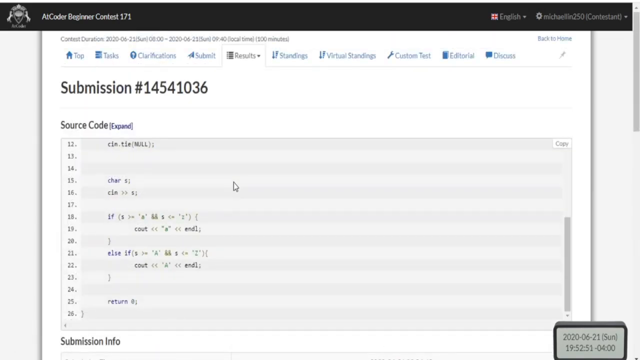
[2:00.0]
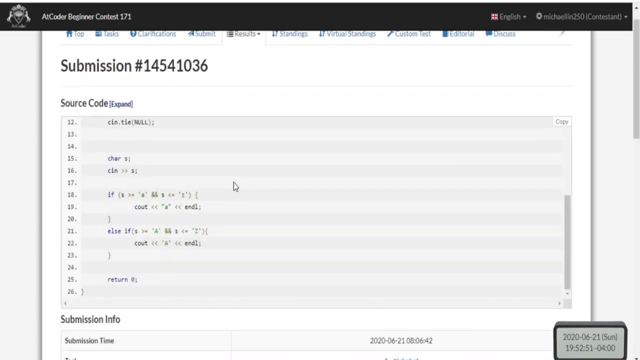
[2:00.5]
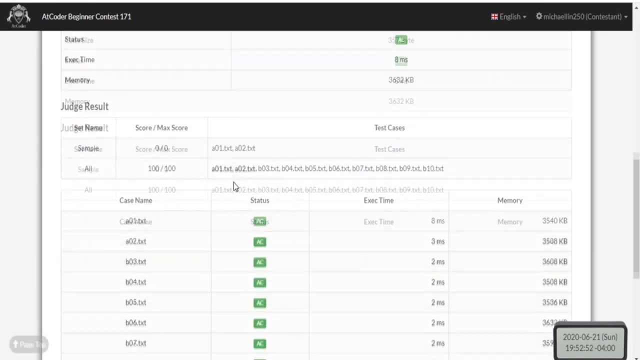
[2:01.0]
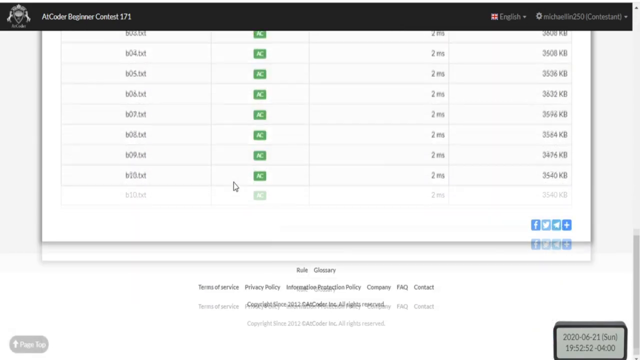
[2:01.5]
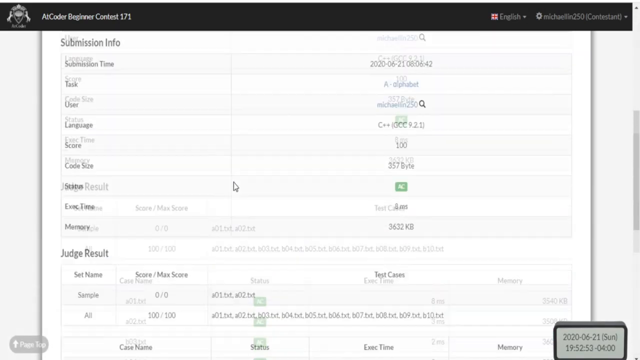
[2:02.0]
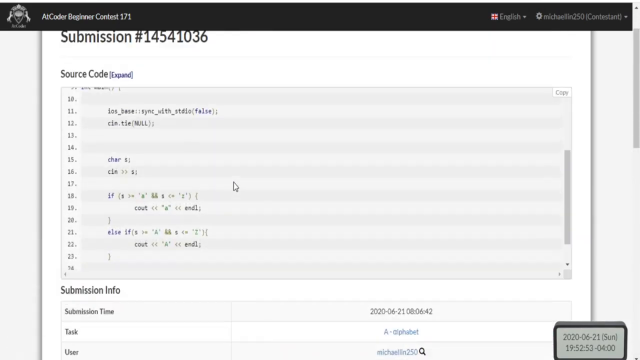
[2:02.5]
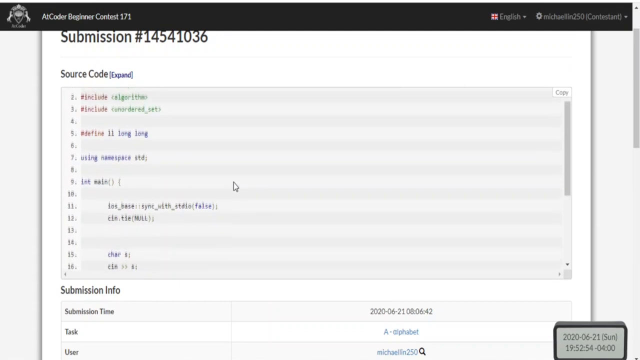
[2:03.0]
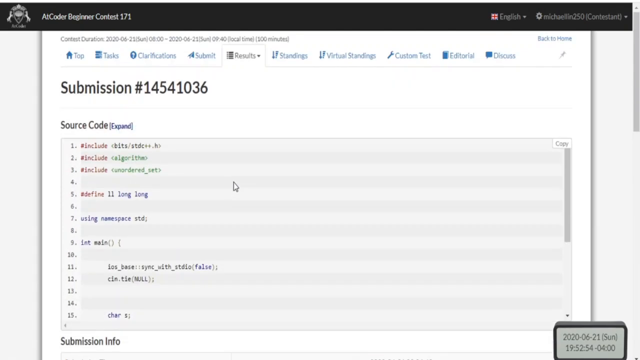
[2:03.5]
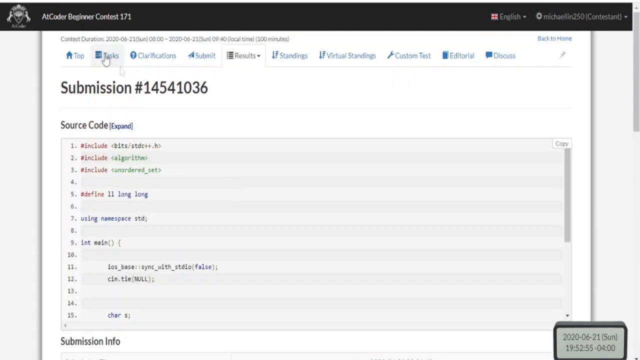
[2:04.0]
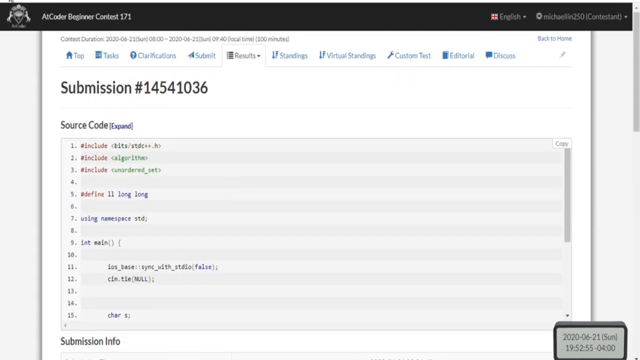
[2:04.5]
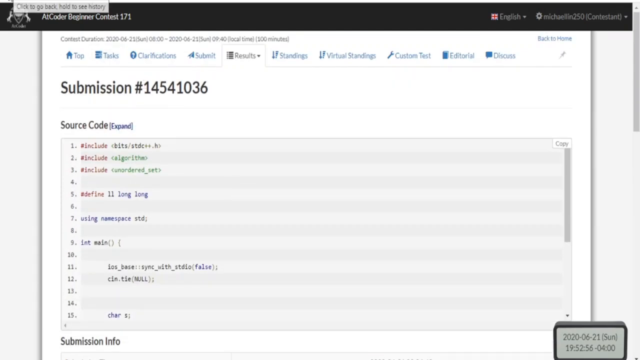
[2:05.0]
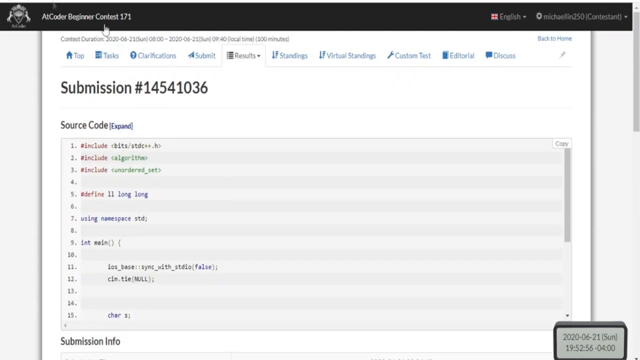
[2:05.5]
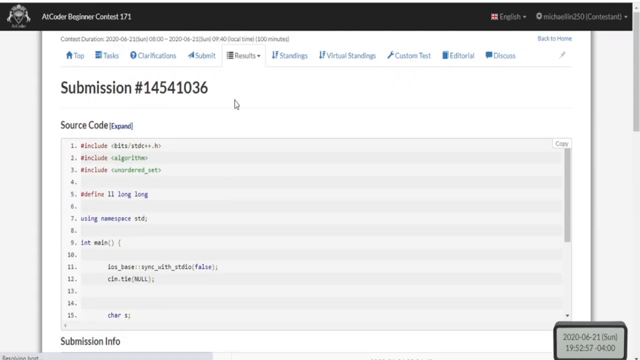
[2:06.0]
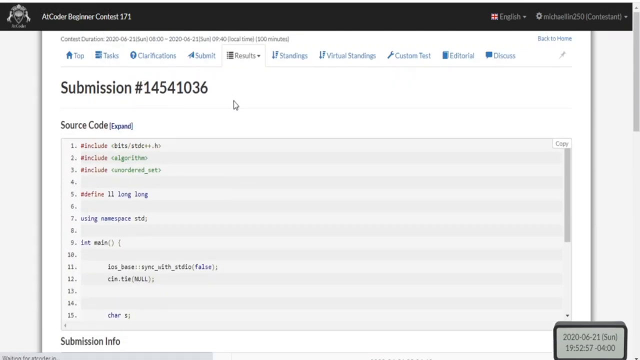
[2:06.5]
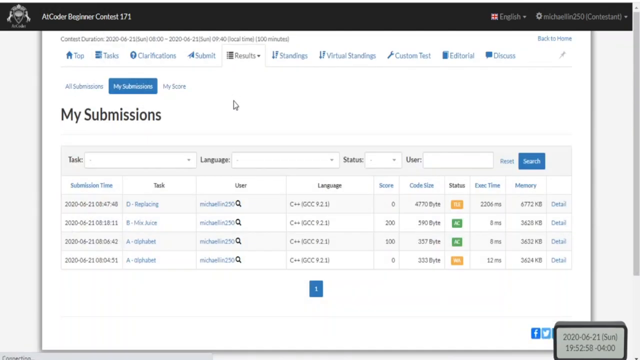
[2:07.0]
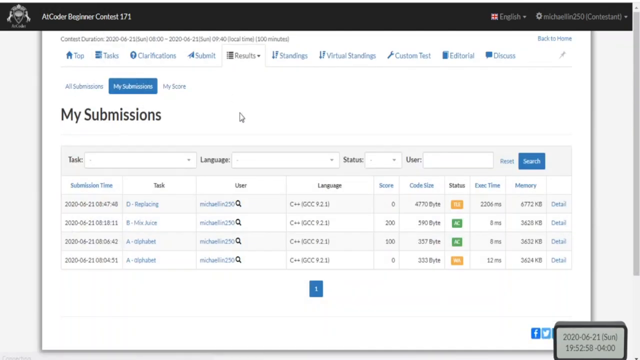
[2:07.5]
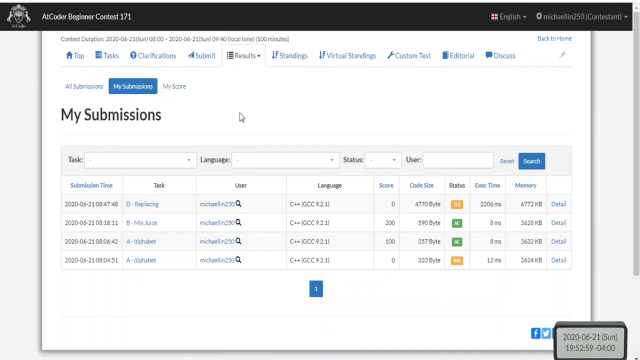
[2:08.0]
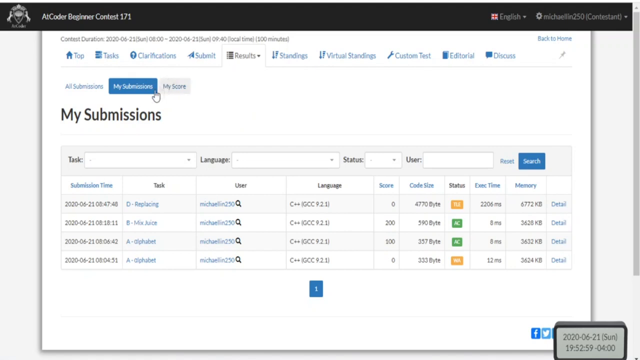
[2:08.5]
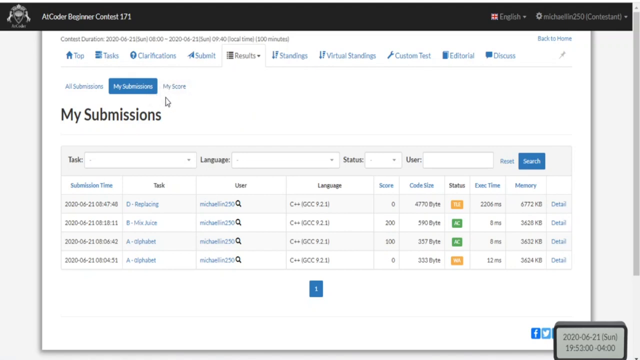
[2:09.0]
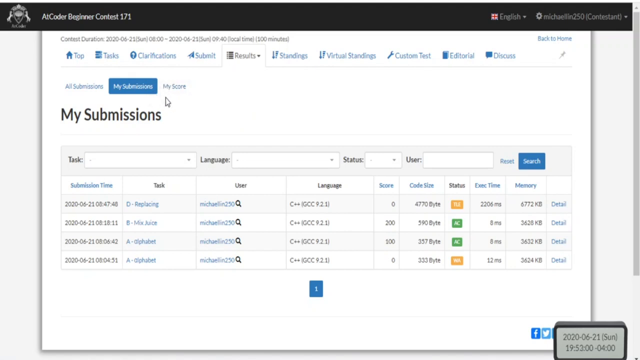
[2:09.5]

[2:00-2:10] Someone's computer screen shows a black banner across the top, with what appears to be the title in gray text in the upper left: "AI Coder Beginner Contest 171." In the upper right one drop-down has English selected and another has the username selected. Below is what looks like a virtual sheet of paper, with the section being viewed titled "Submission Info." Categories on the left are "Submission Time," "Task," "User," "Language," "Score," "Code Size," "Status," "Exec Time," and "Memory." The view scrolls down to a "Judge Result" section after that.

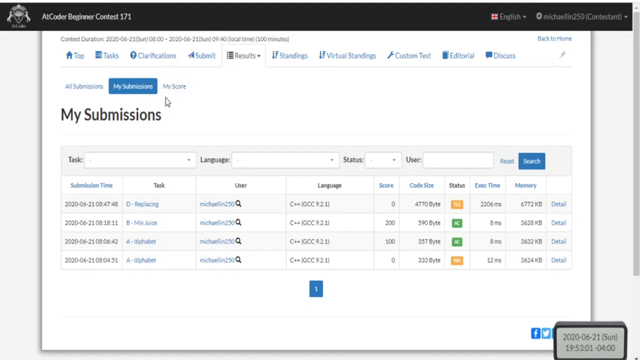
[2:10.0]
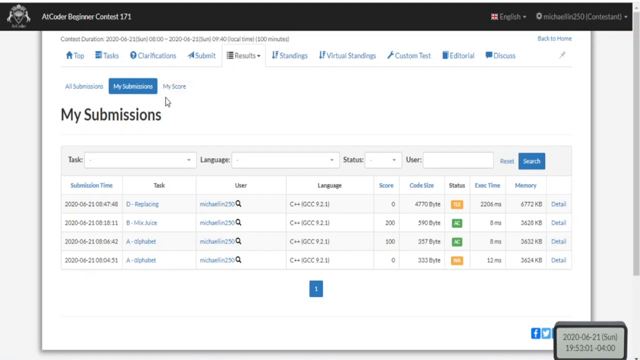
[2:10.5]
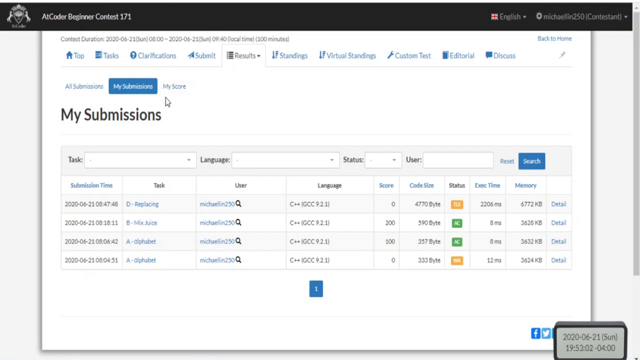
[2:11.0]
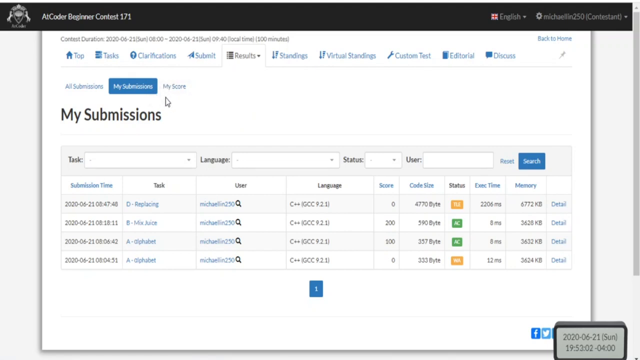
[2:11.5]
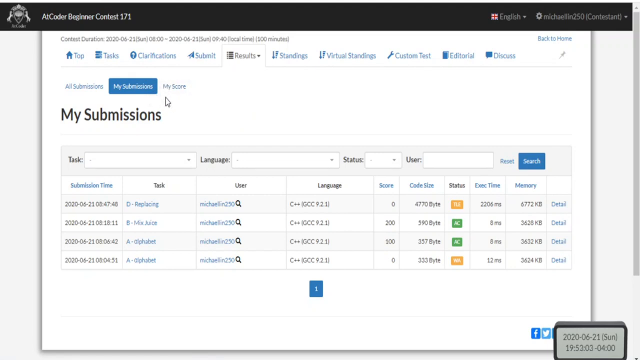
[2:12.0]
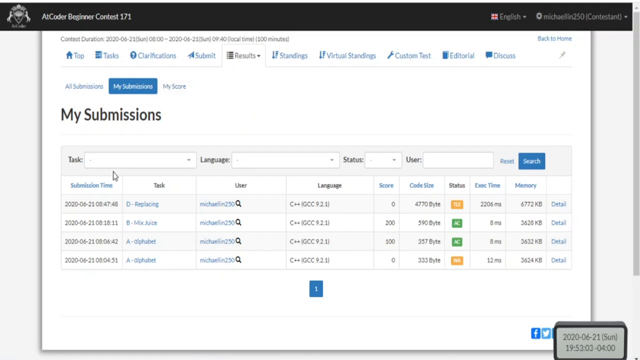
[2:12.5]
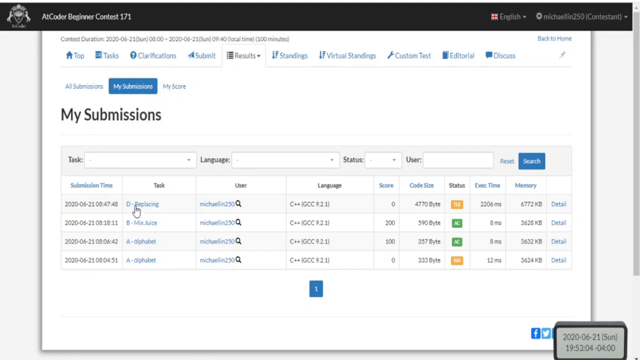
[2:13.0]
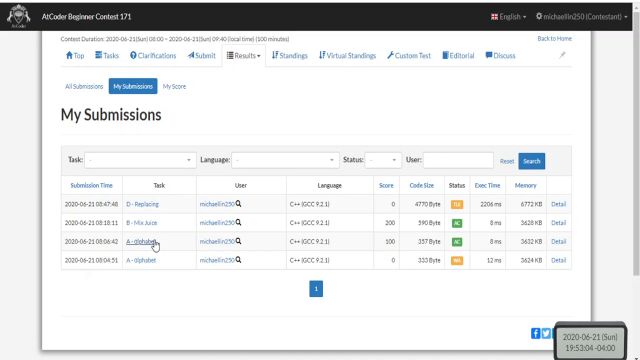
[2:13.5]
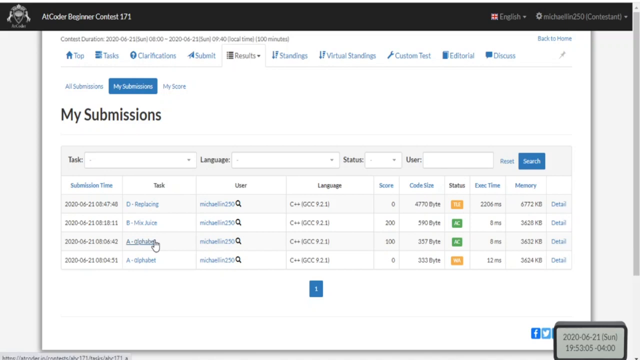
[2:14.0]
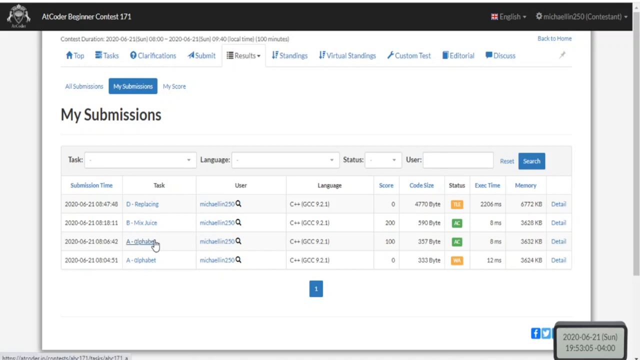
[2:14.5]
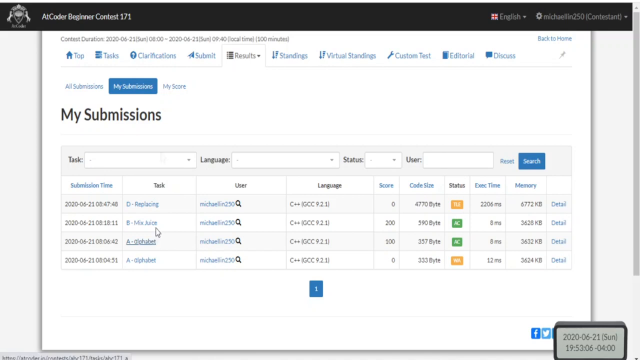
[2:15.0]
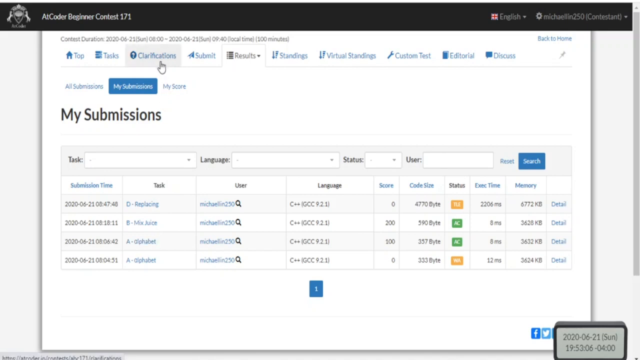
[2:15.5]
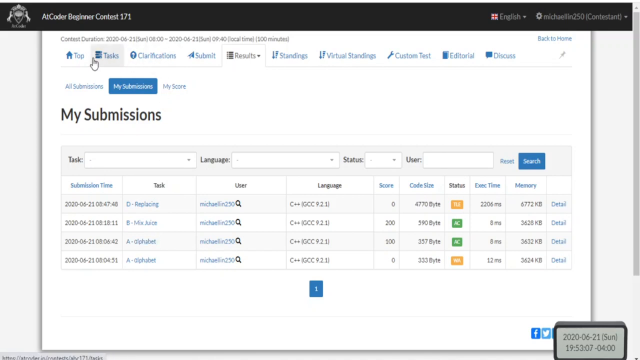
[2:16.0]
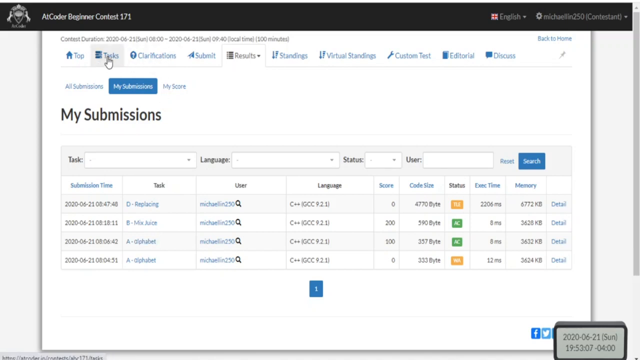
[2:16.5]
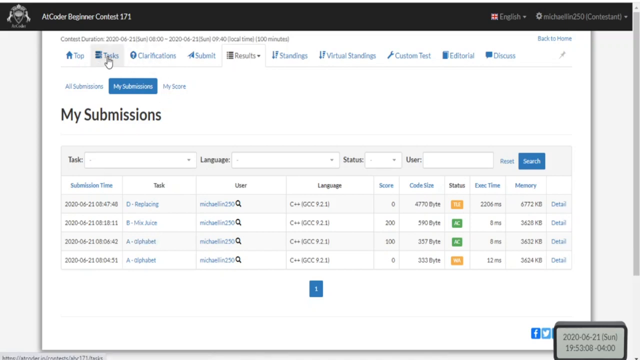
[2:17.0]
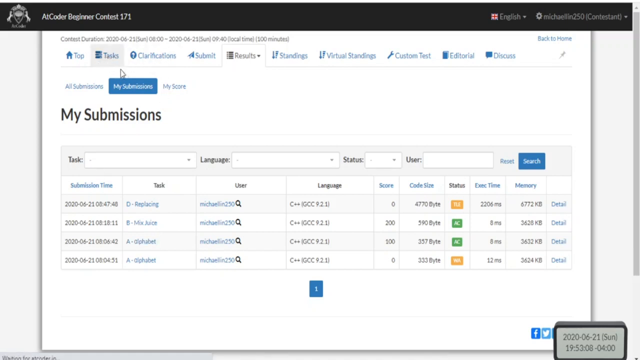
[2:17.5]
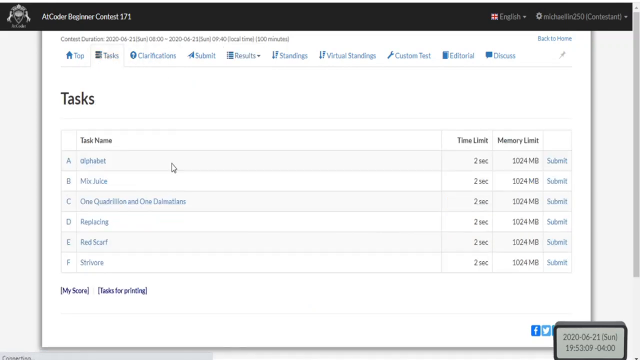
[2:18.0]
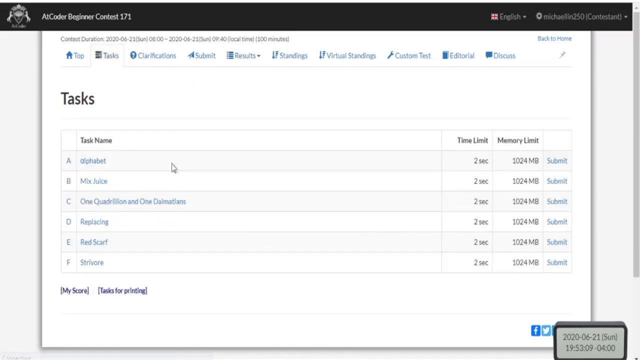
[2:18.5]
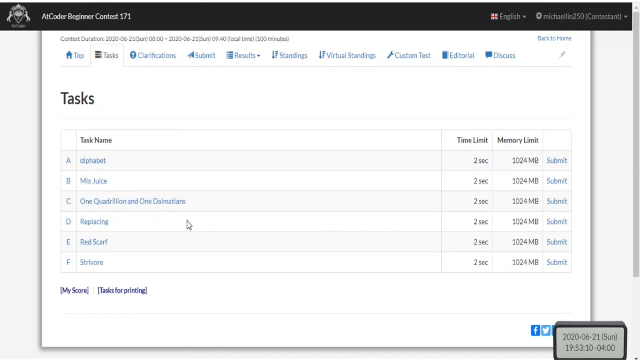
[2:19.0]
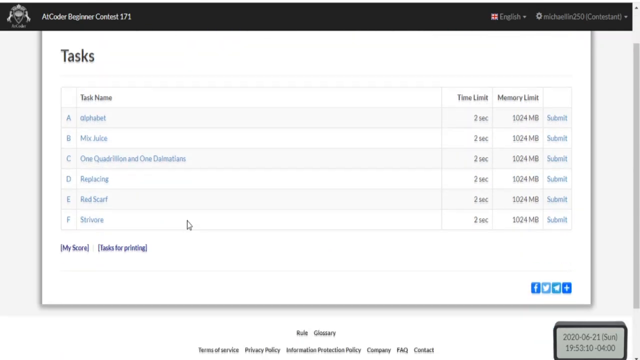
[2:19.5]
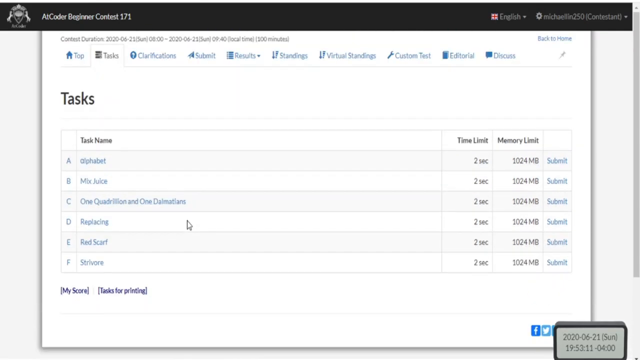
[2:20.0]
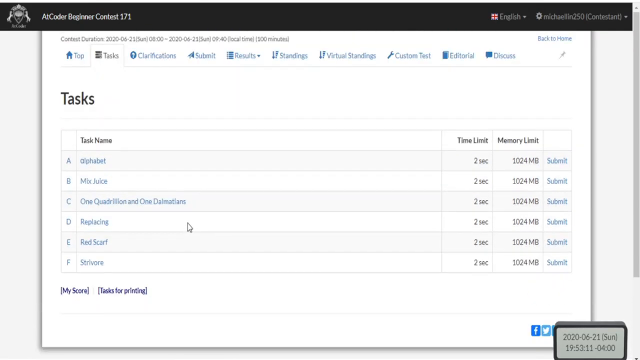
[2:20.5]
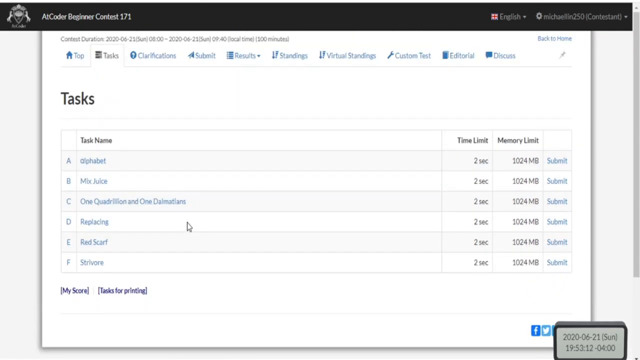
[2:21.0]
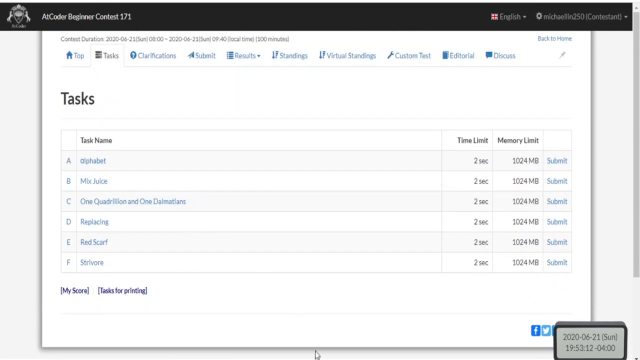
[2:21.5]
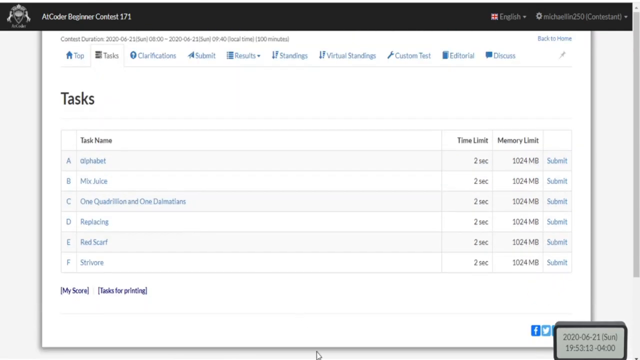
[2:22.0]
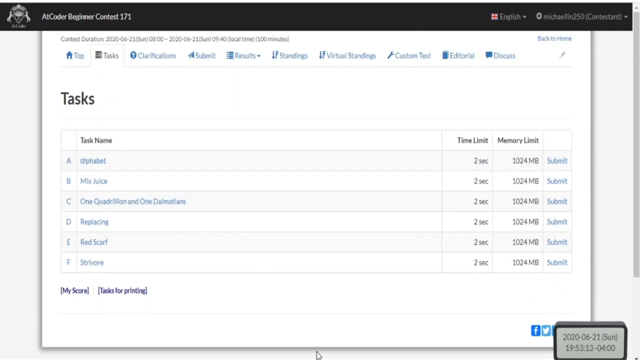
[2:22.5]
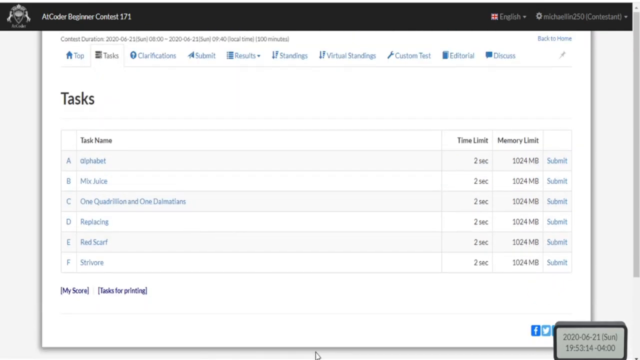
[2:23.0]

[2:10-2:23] Someone's computer screen shows a black banner across the top, with gray text in the upper left reading "AI Coder Beginner Contest 171." In the upper right are two drop-downs, English and the username. The main area has about 10 tabs across the top, and the fifth one, Results, appears to be selected. On the left is a large black title, "My Submissions," with a spreadsheet below it. Its columns from left to right are submission time, task, user, language, score, code size, status, exec time, and memory, with the last one unlabeled. There are four entries in total.